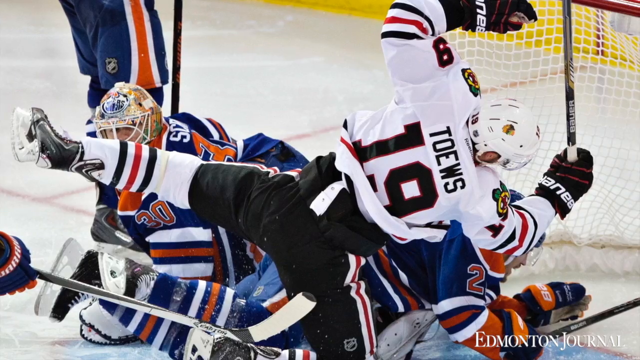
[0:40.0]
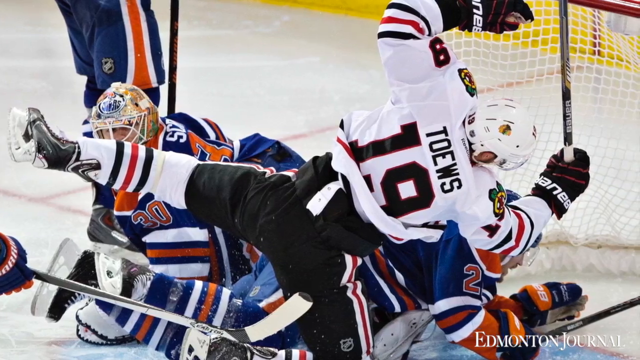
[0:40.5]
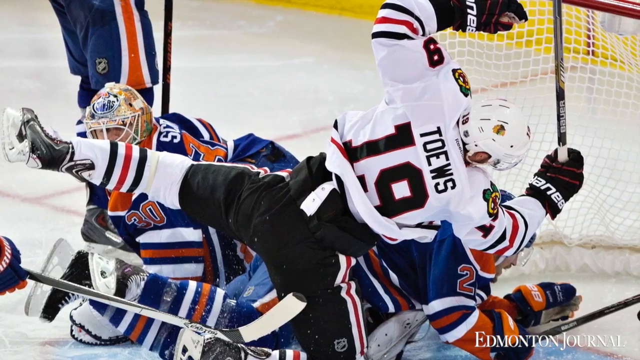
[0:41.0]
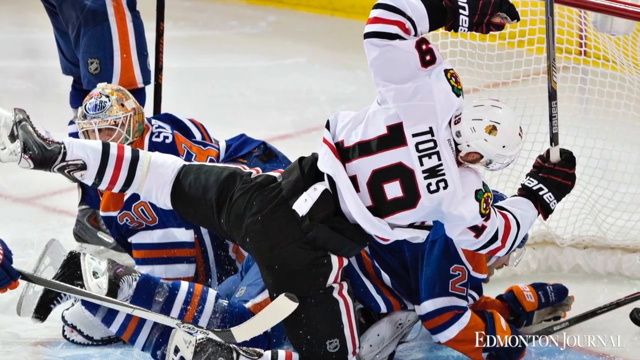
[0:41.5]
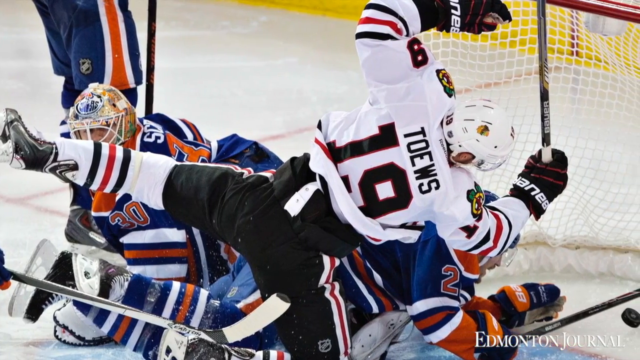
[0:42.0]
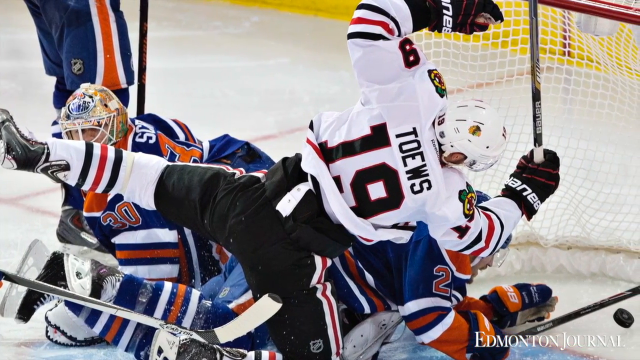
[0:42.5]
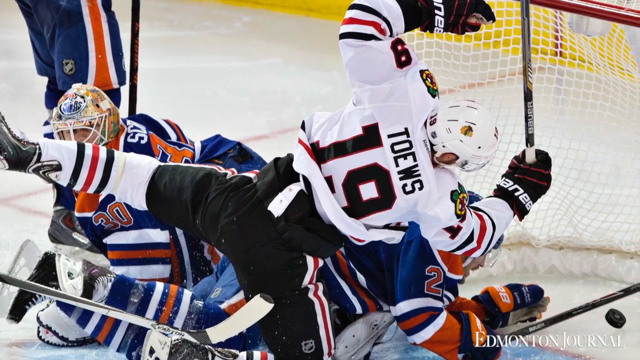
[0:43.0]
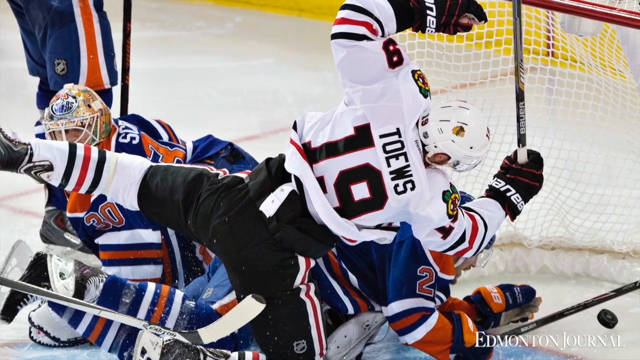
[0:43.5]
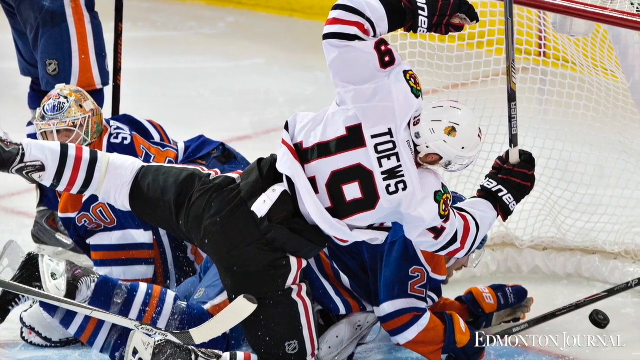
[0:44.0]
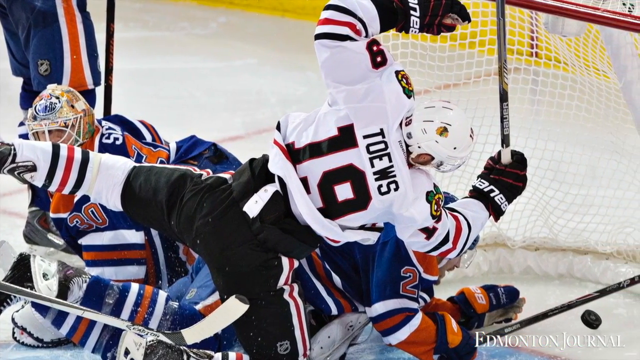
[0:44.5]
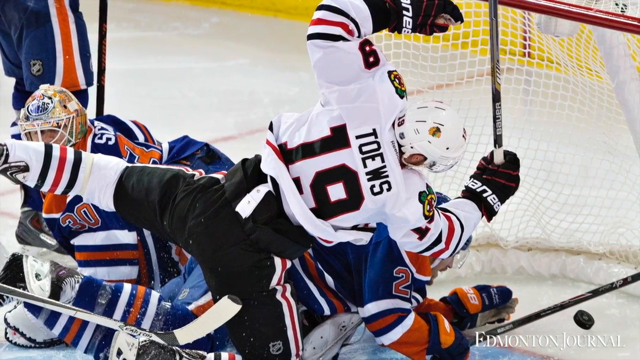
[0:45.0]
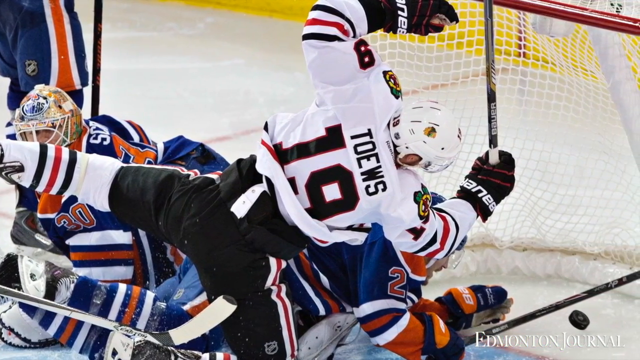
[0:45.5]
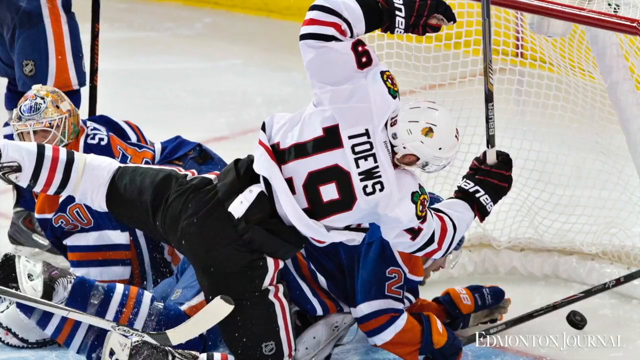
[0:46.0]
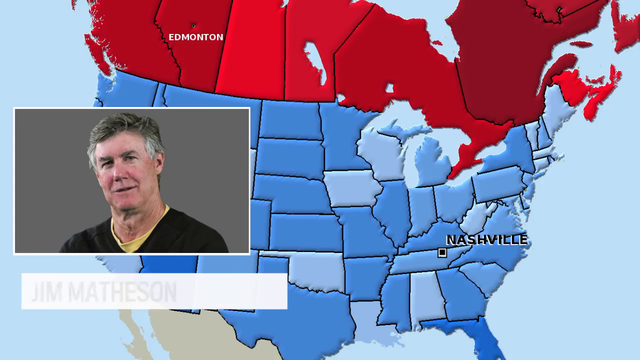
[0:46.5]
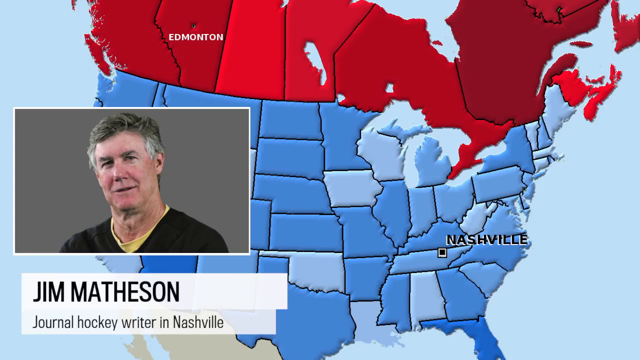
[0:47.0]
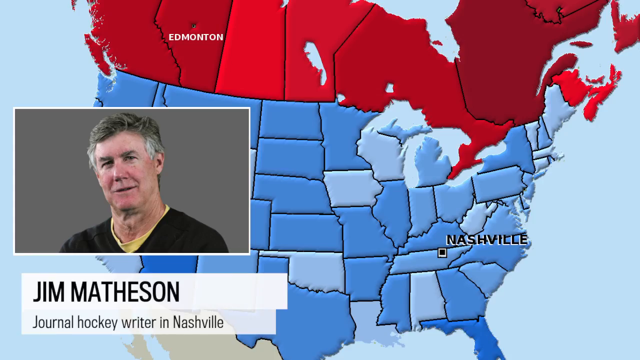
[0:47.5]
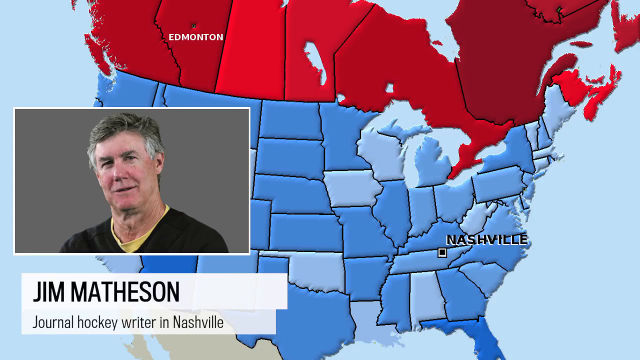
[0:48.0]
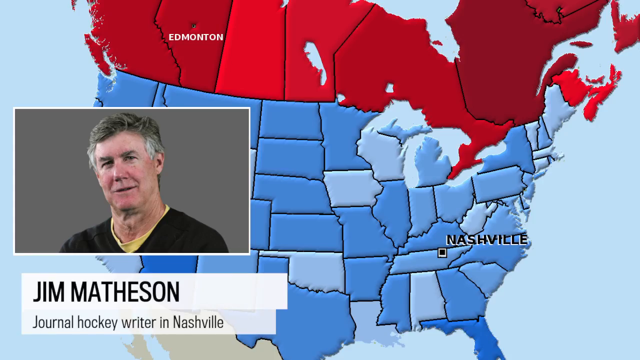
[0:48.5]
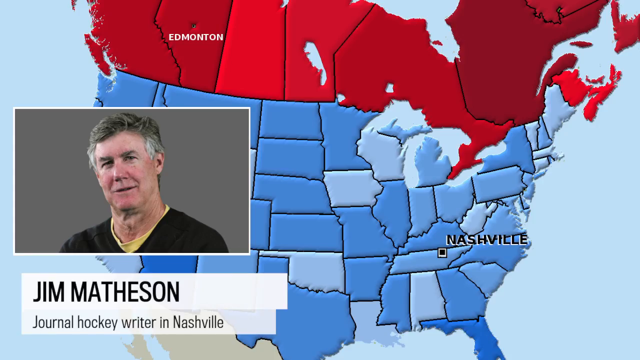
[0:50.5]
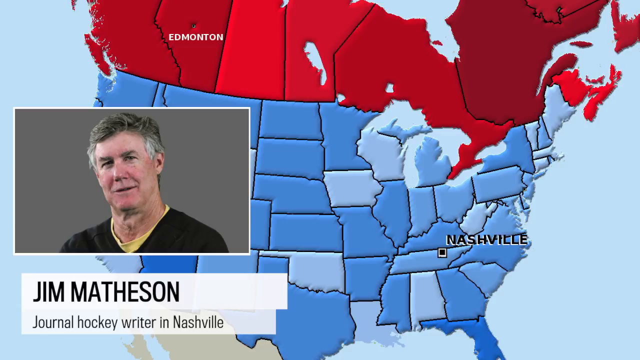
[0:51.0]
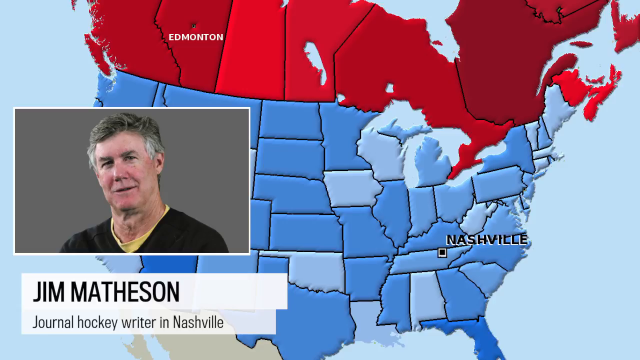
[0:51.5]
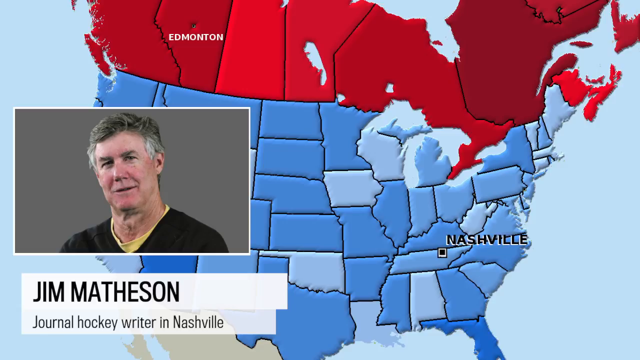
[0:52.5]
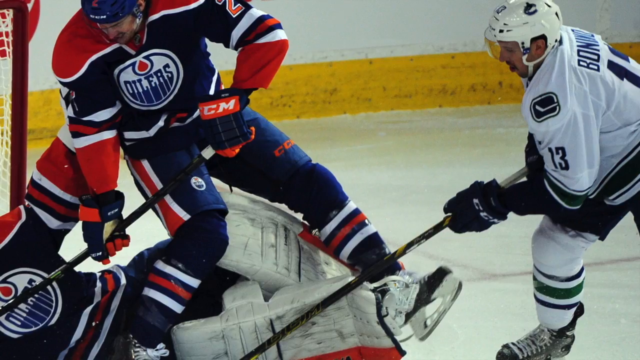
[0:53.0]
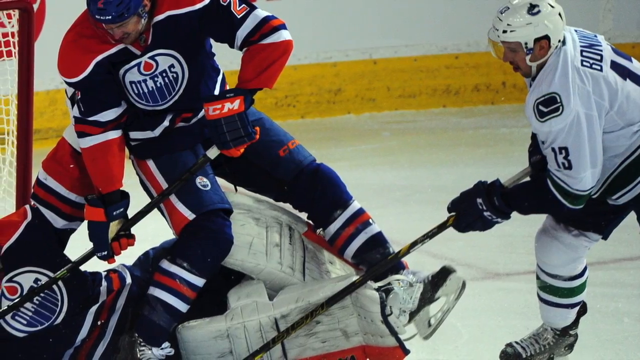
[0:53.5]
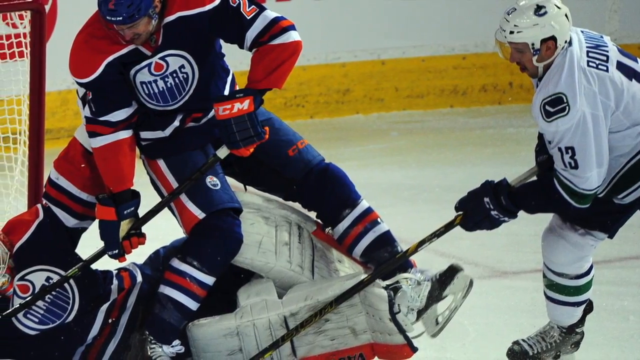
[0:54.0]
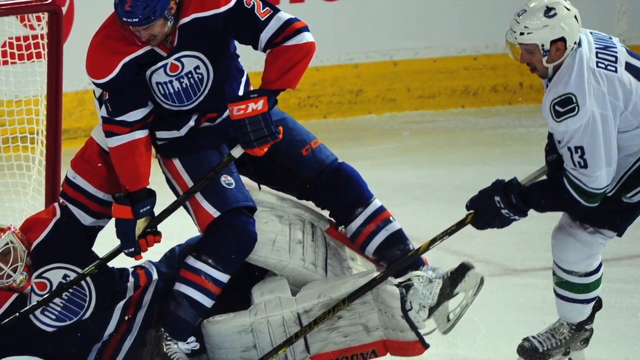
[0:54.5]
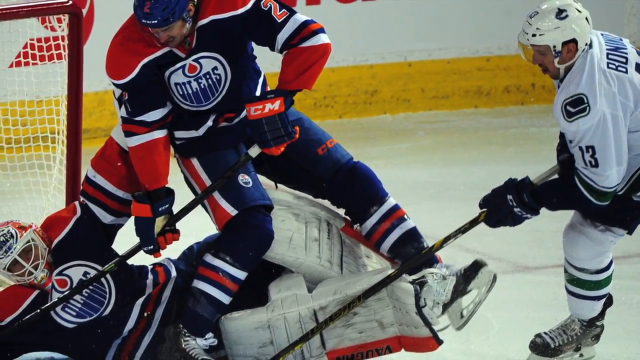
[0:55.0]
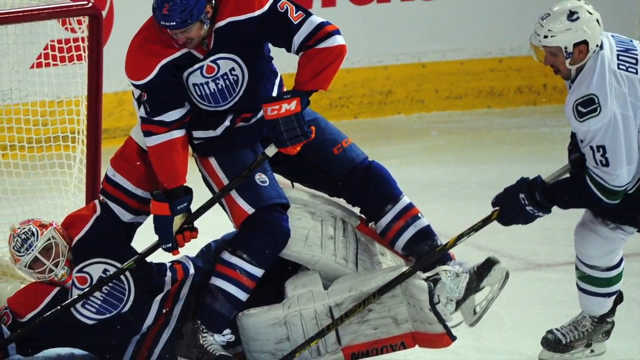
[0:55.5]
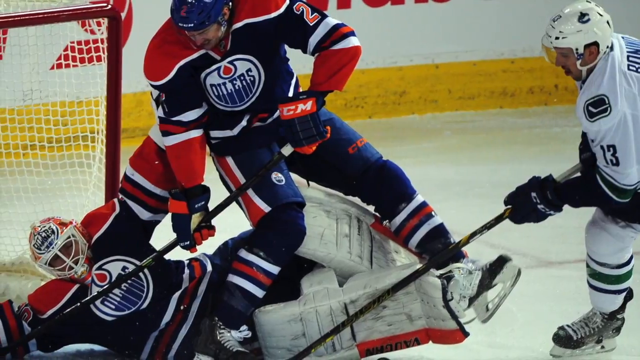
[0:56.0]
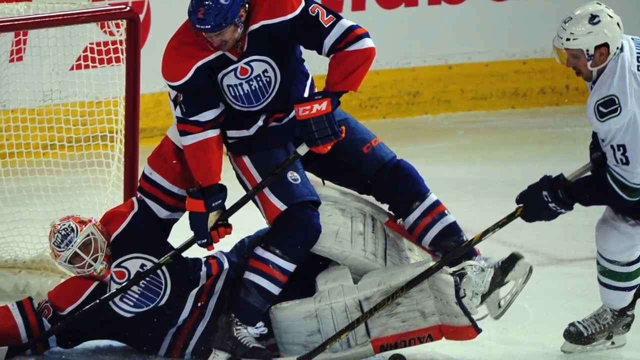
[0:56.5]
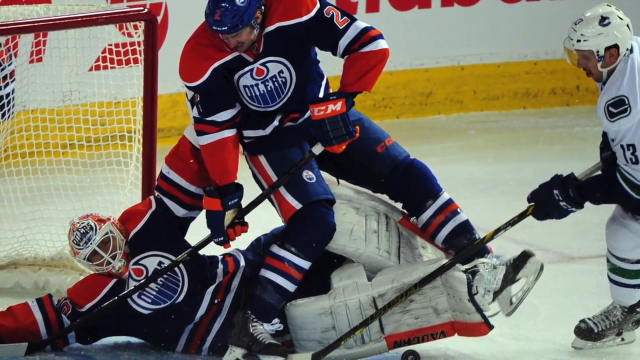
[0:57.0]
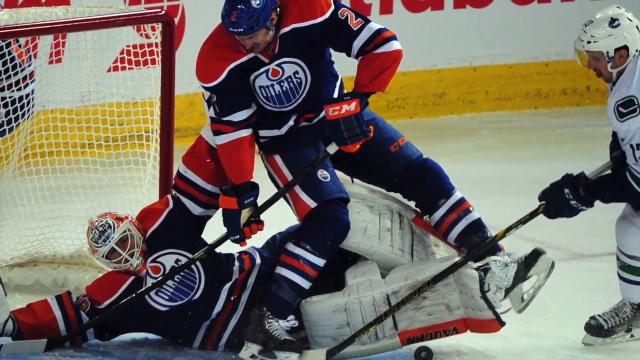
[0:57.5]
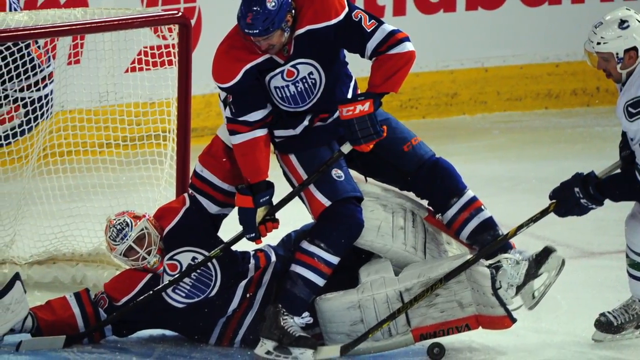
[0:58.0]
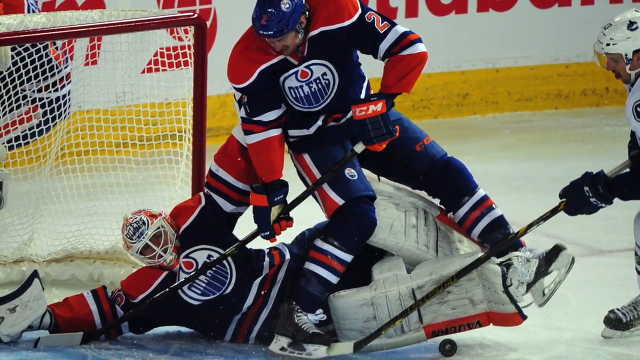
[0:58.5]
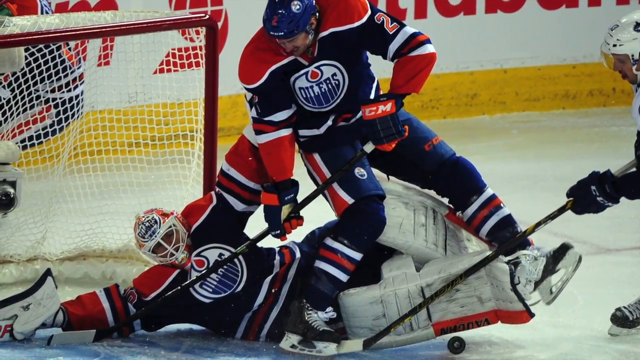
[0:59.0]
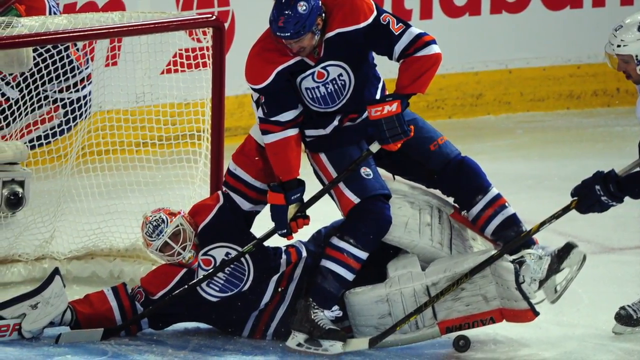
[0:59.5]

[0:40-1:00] A still image shows a player whose body looks sideways as he falls on the ice. In front of him are two Oilers players, one of whom appears to be a goalie. To the right is the hockey net, and the puck is in the bottom right corner. The scene changes, and the picture of Jim Matheson appears again on the left side. He looks at the viewer, has gray hair, and wears what looks like a black V-neck shirt or sweater. The map of the United States and Canada is in the background, covering most of the scene, as before. The scene changes to another still image with two Oilers players on the left. One is the goalie, on the ground on the ice with his body sideways. The other, in the middle, appears to be falling down, with his hockey puck extended toward the bottom left corner. On the right is a player from another team. The goalie appears to be making a save, as does the player in the middle. The view slowly shifts to the left.